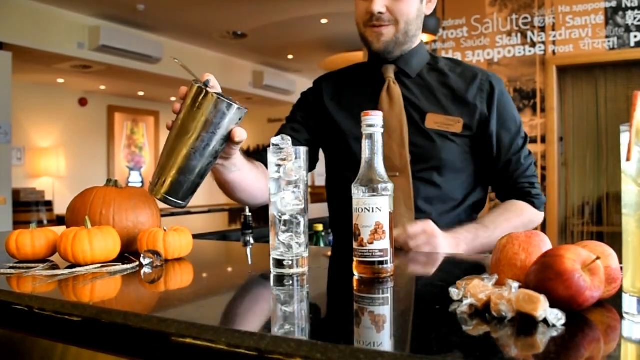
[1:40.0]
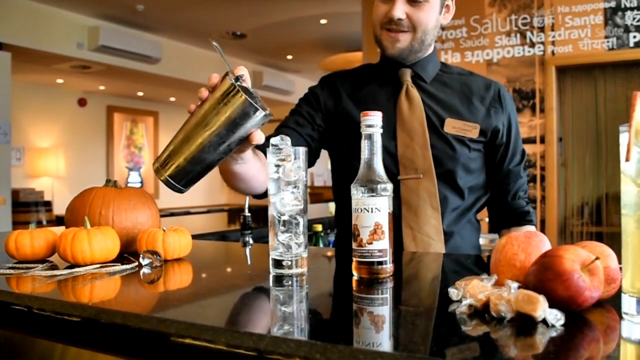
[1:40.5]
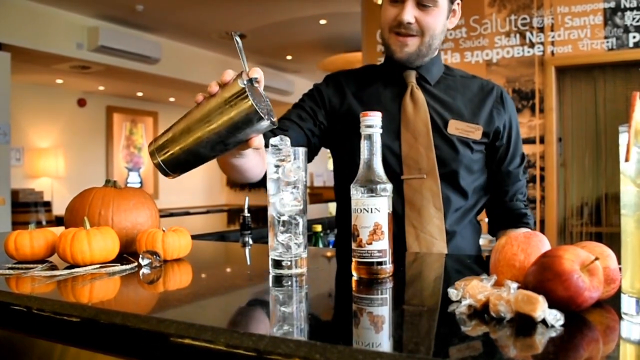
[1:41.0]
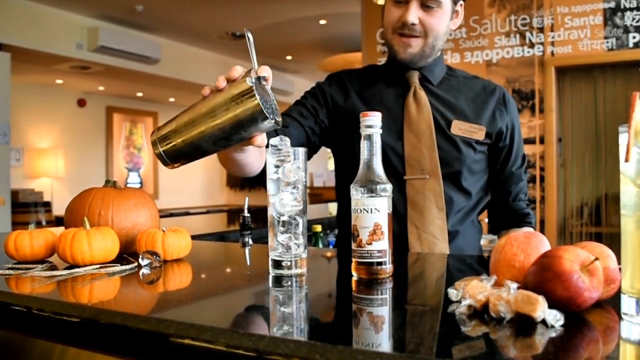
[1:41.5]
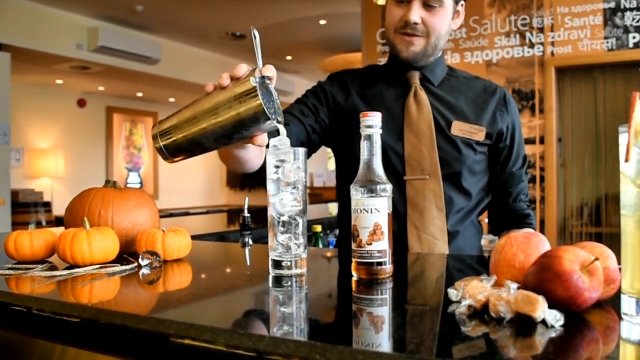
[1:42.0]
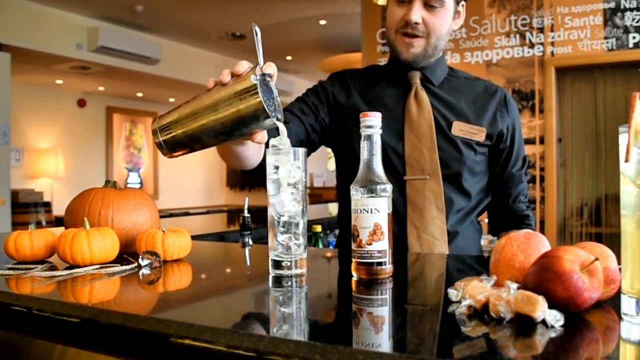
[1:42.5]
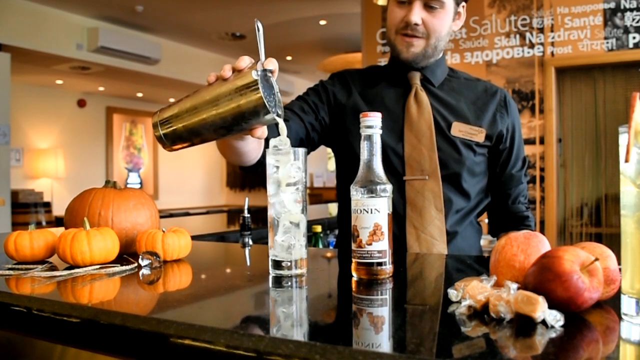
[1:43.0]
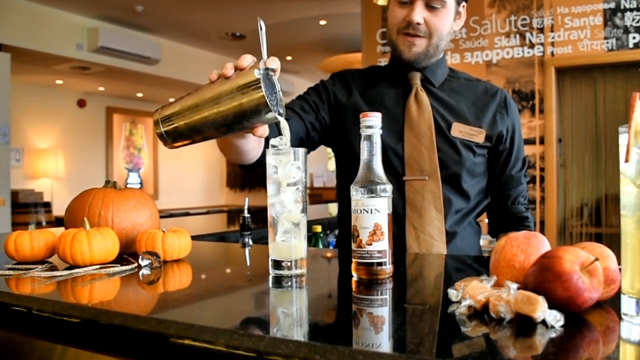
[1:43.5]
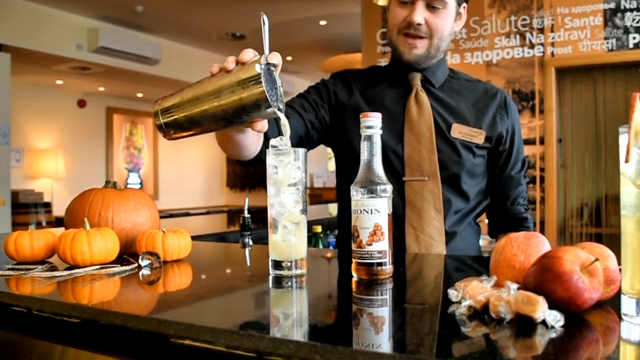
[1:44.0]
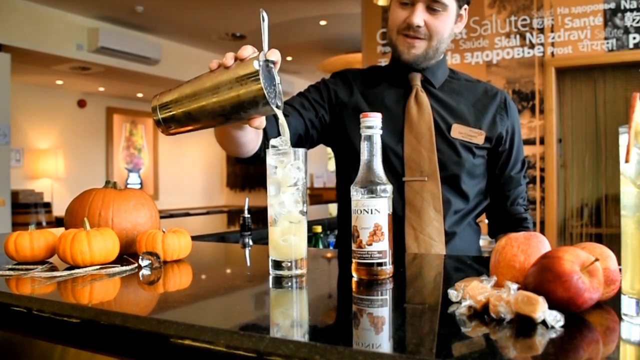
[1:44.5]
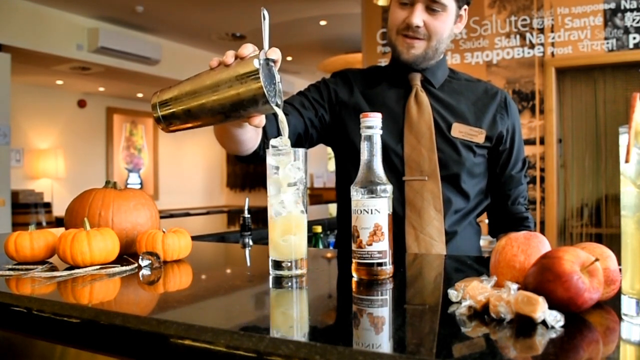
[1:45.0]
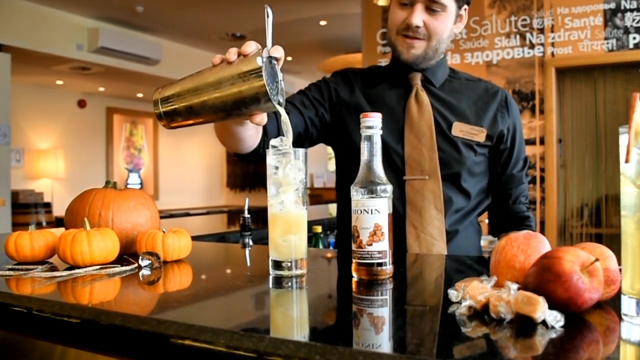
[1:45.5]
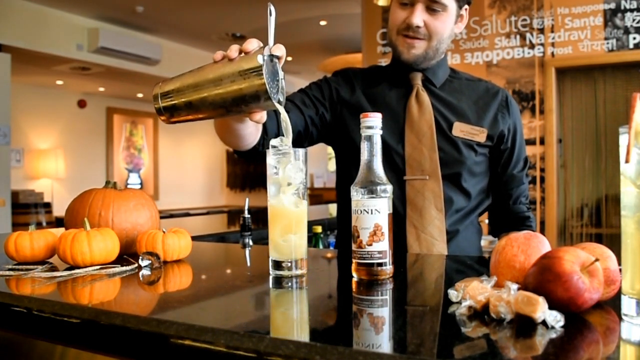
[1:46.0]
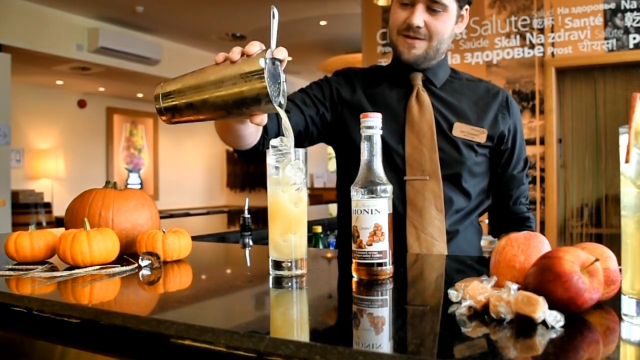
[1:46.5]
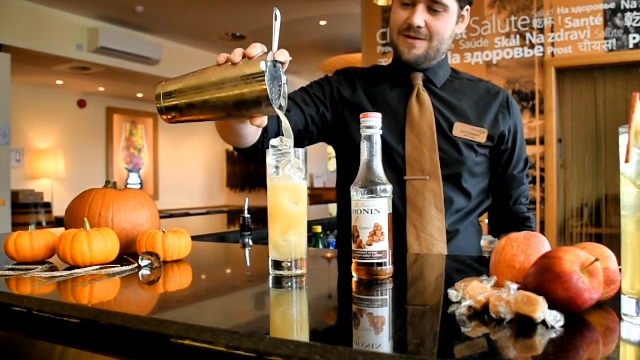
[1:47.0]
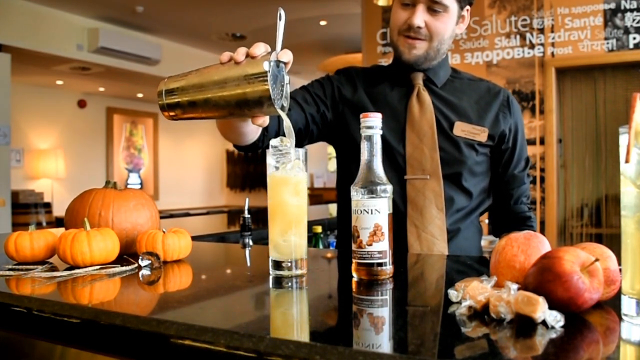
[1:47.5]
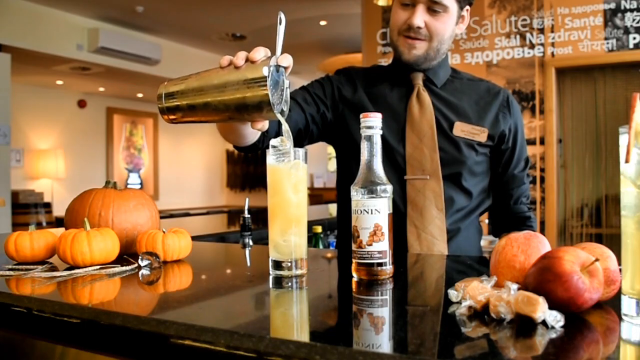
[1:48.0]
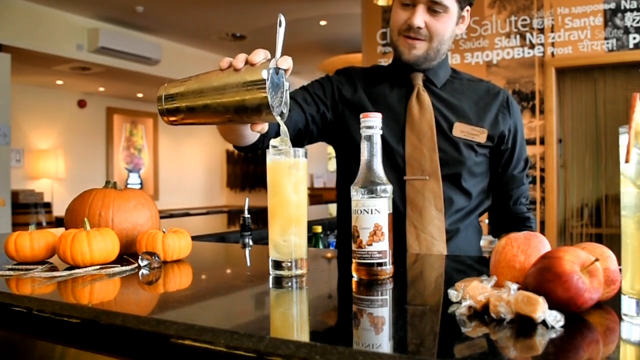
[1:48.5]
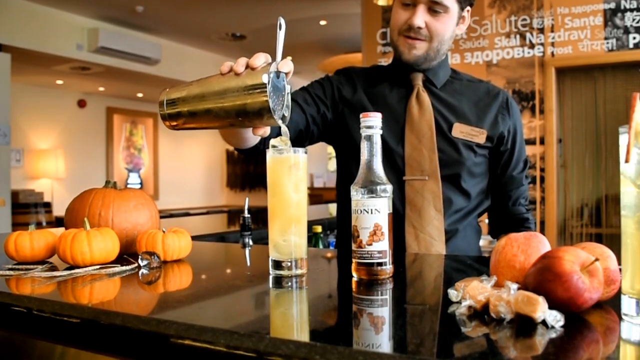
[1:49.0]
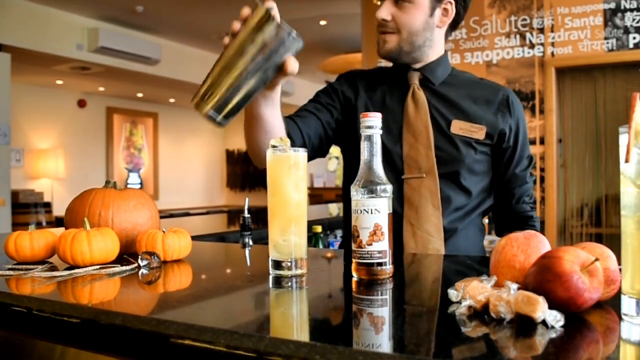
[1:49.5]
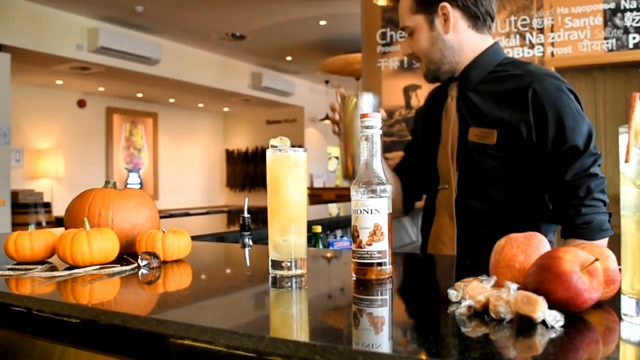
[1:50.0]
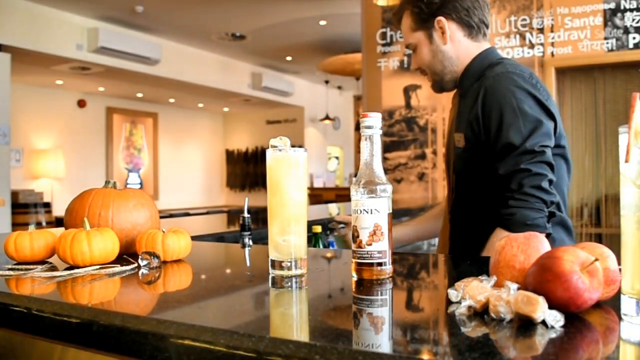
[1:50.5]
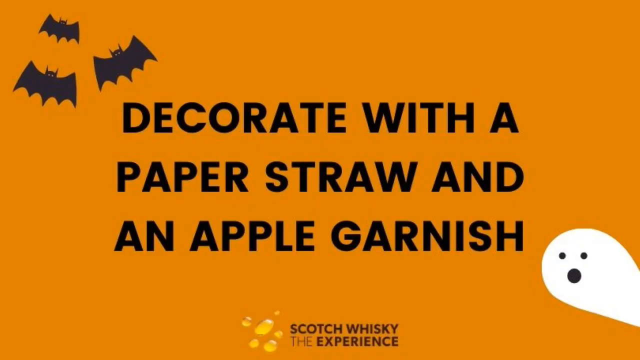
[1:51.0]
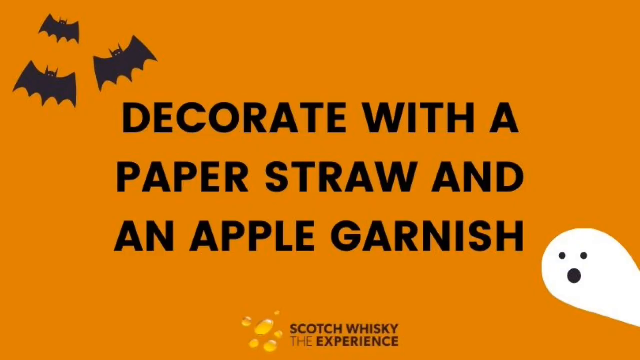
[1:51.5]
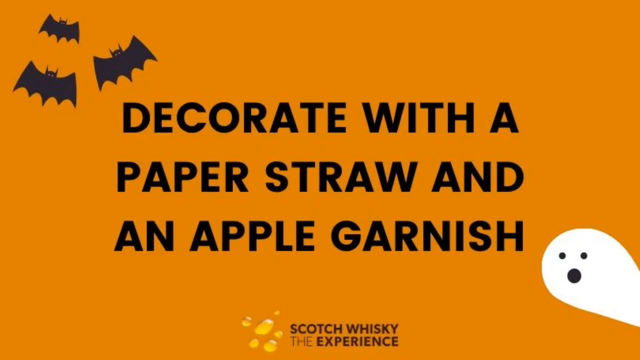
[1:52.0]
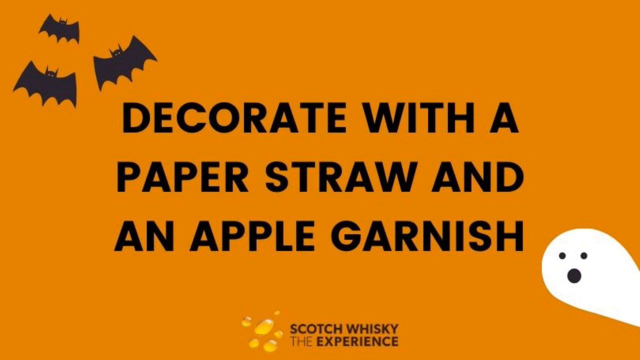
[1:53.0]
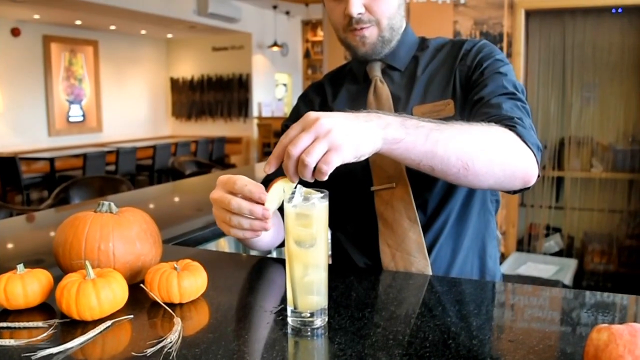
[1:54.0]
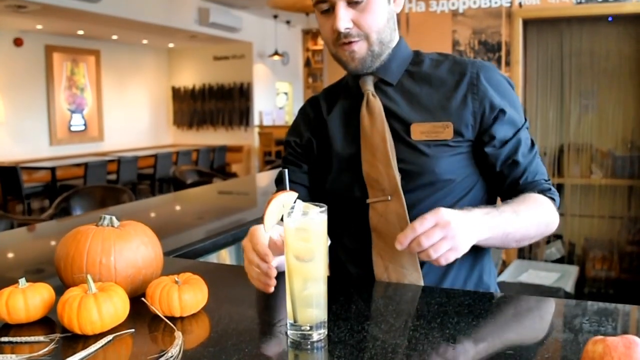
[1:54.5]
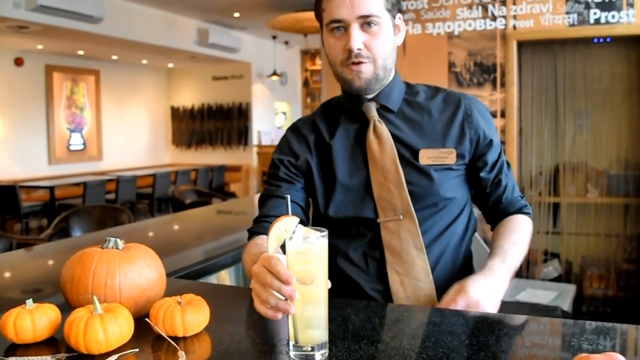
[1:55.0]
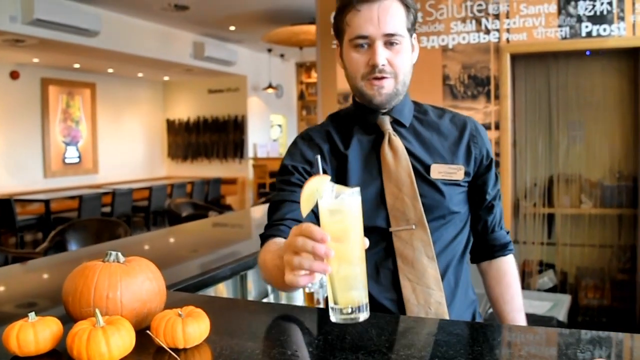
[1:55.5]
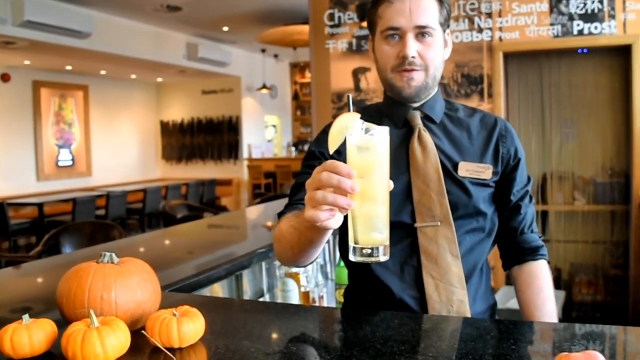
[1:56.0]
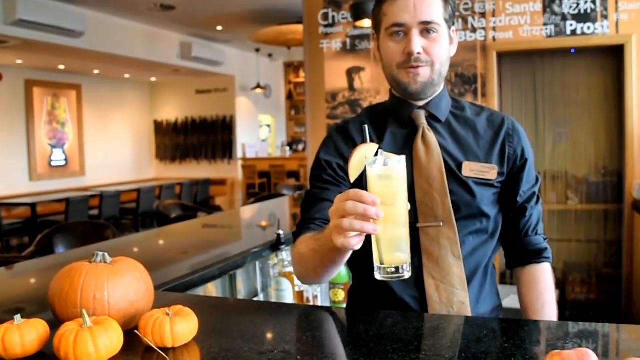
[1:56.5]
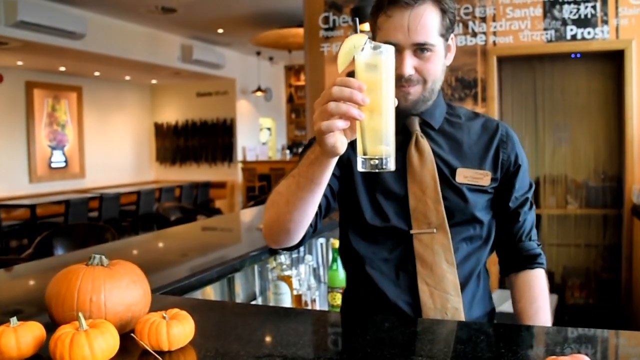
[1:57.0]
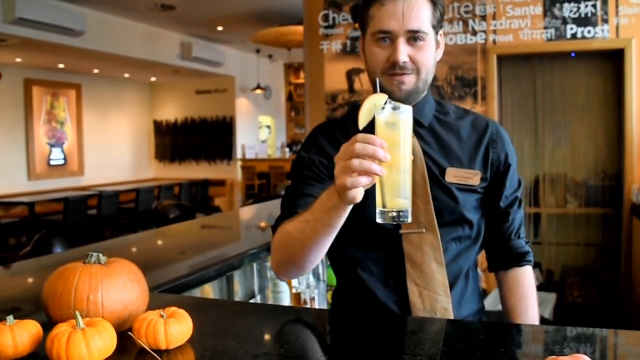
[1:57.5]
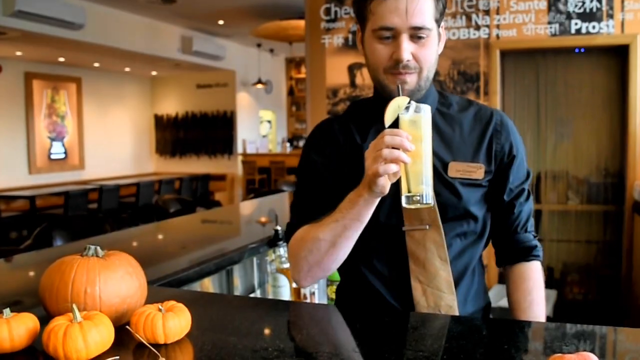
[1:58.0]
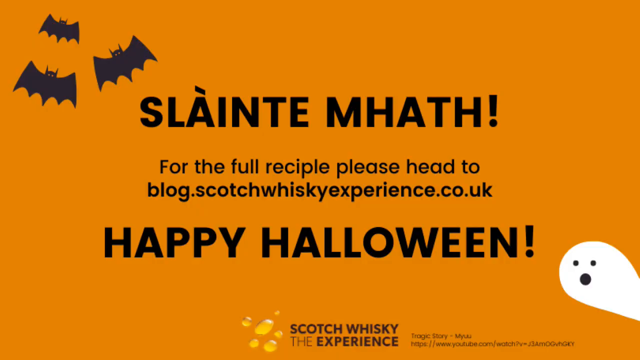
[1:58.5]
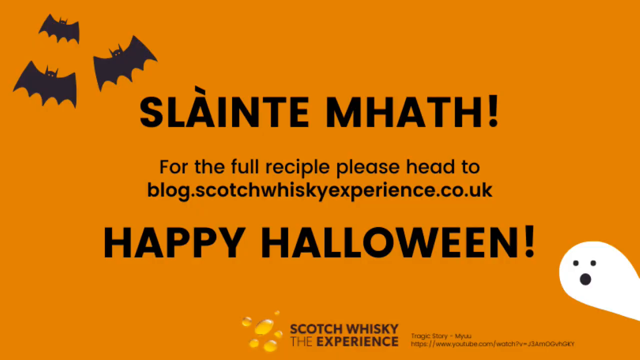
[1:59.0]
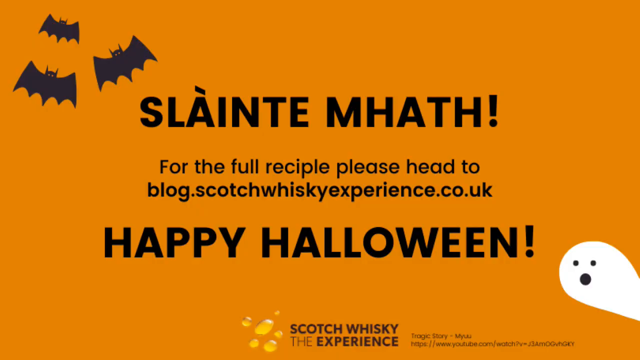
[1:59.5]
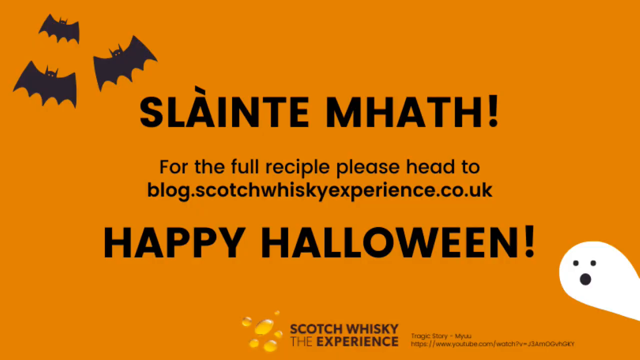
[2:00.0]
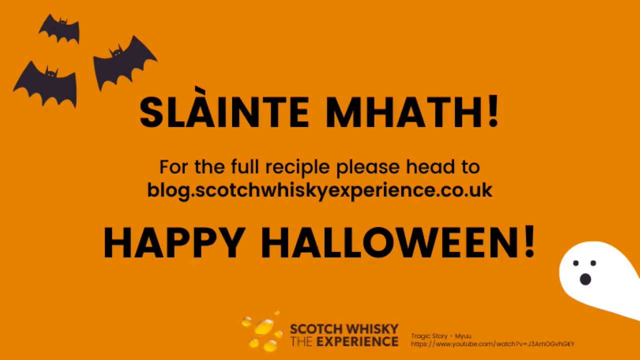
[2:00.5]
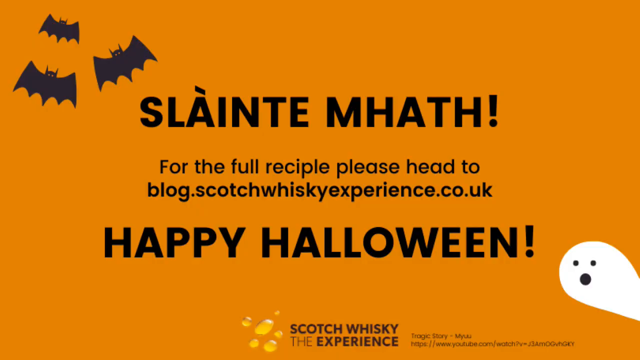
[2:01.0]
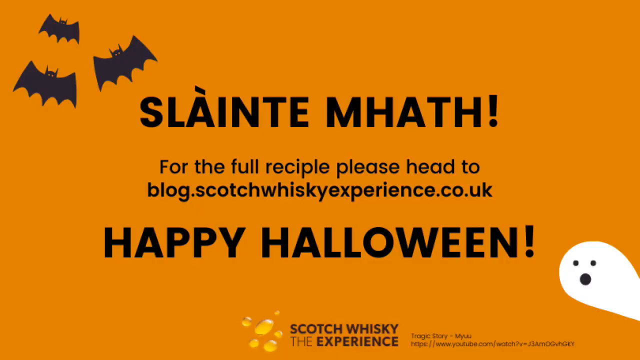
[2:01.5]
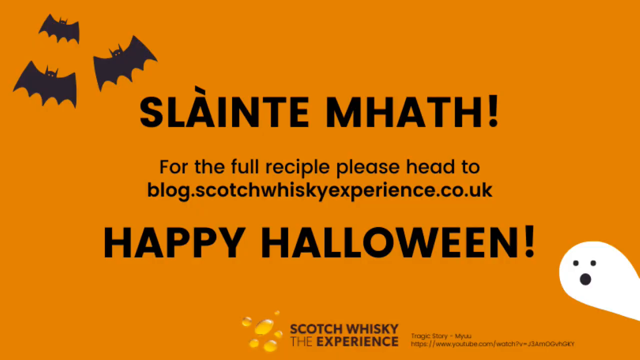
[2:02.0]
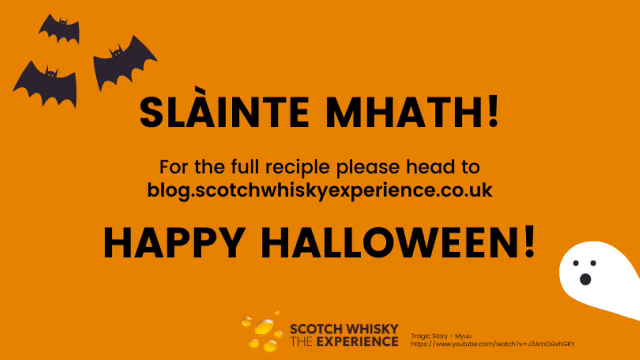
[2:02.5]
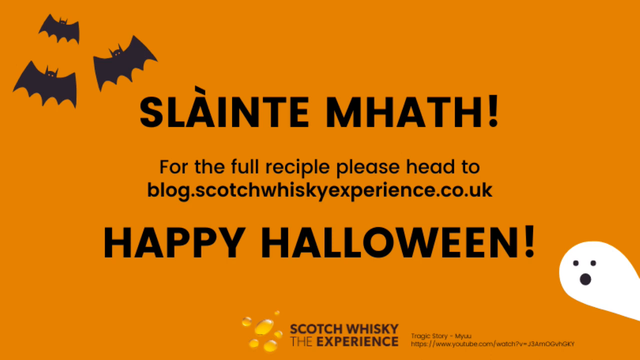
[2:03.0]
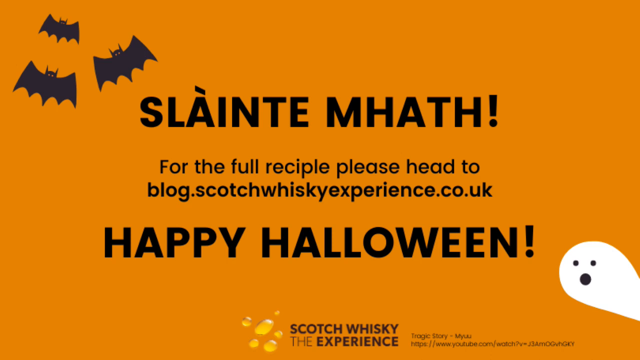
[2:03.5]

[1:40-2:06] The bartender is in front of a countertop with a large silver cup. He is in his mid-30s with dark hair, dark eyes and a short mustache and beard, wearing a long-sleeved black shirt that is rolled up, a name tag and an orange tie. In front of him, to his right, the viewer's left, are a large pumpkin and three smaller pumpkins. Having added many different ingredients to the concoction, he pours it into a large glass with ice, filling it all the way to the top. At the end, black letters on an orange background, with bats in the left corner and a ghost in the lower right, read "Decorate with a paper straw and an apple garnish."